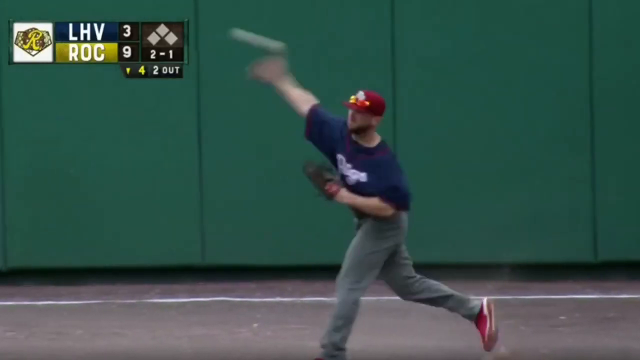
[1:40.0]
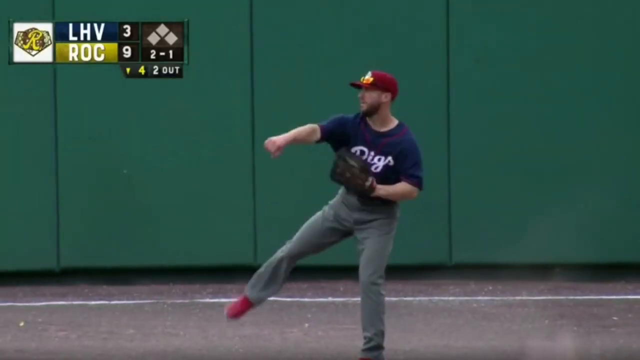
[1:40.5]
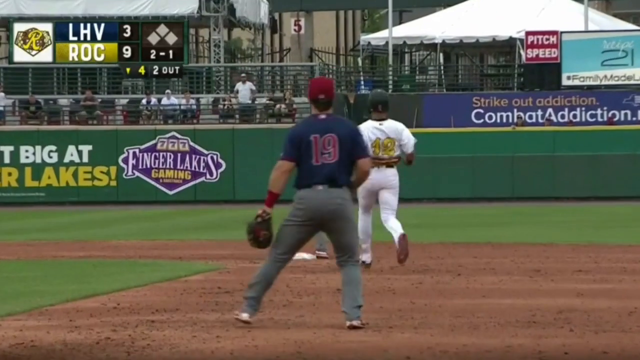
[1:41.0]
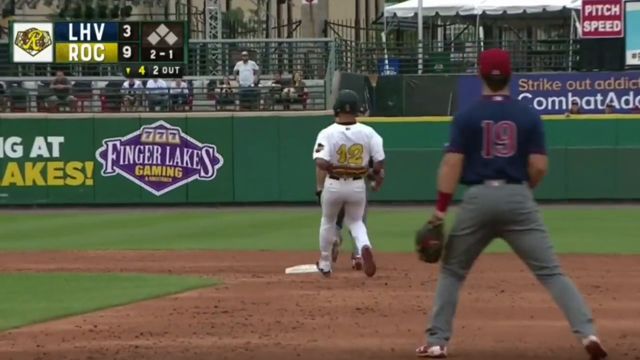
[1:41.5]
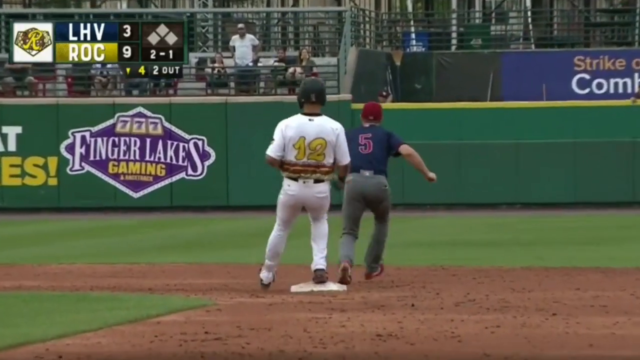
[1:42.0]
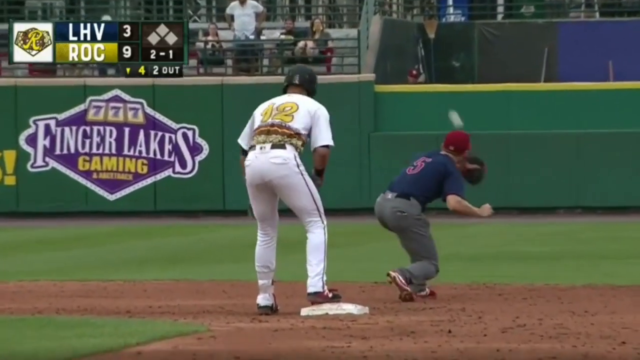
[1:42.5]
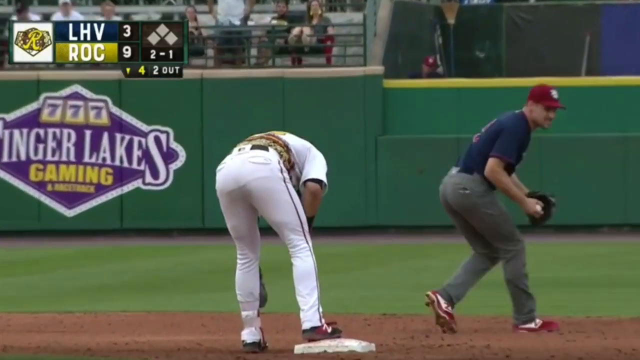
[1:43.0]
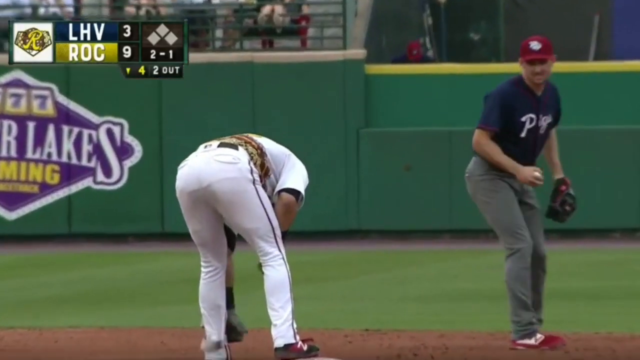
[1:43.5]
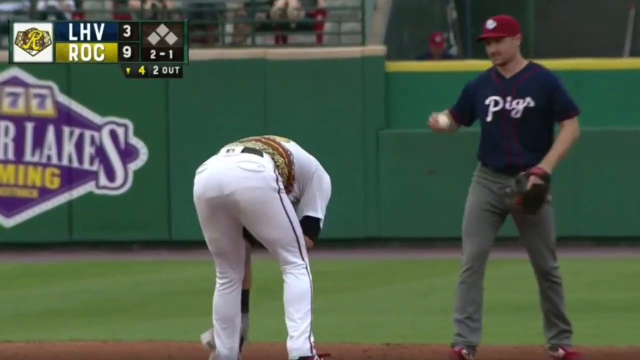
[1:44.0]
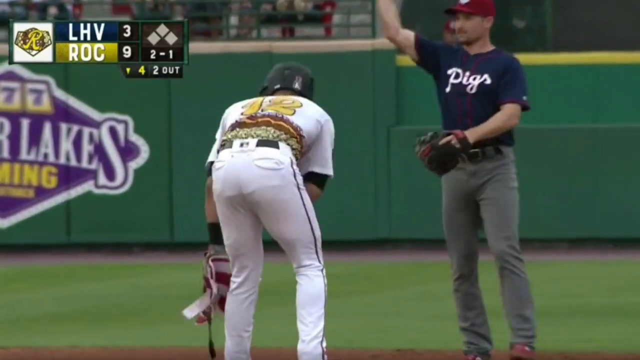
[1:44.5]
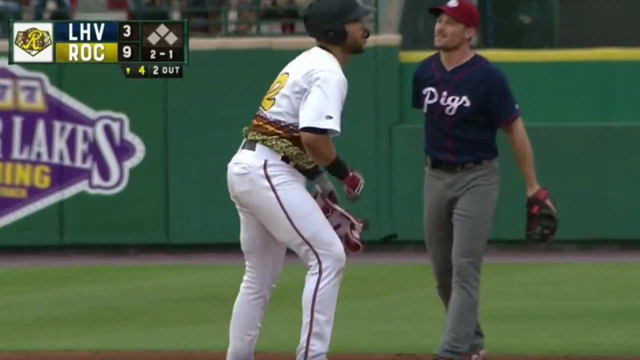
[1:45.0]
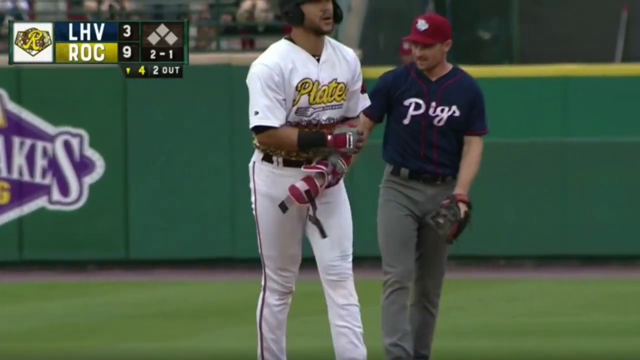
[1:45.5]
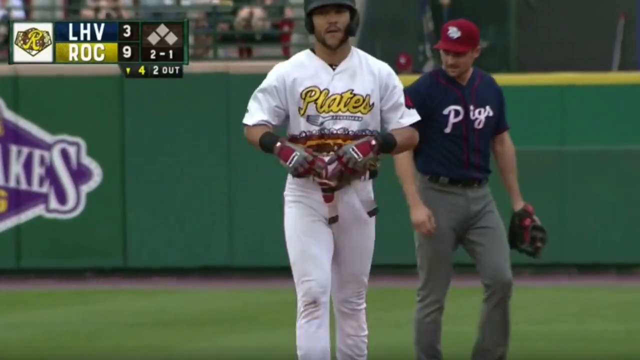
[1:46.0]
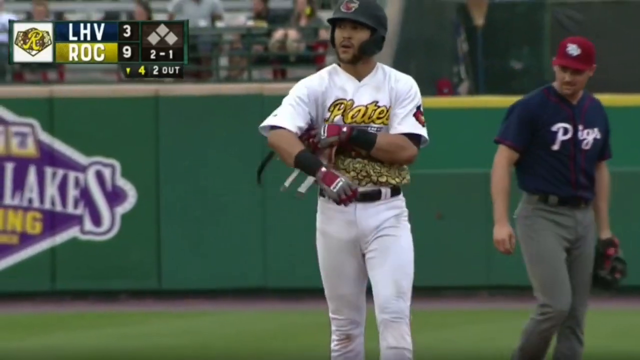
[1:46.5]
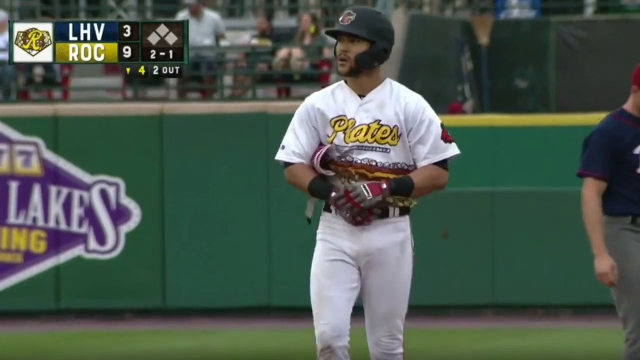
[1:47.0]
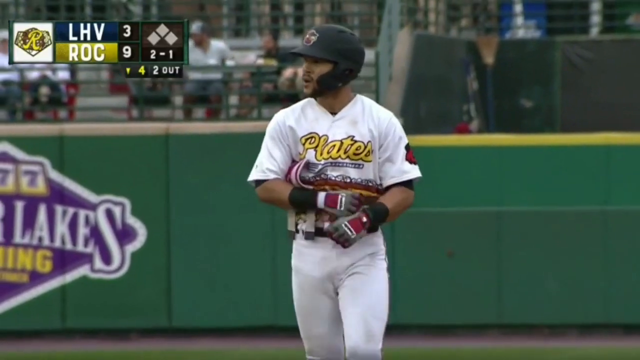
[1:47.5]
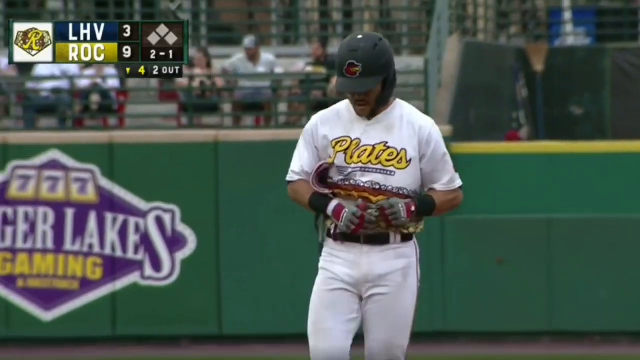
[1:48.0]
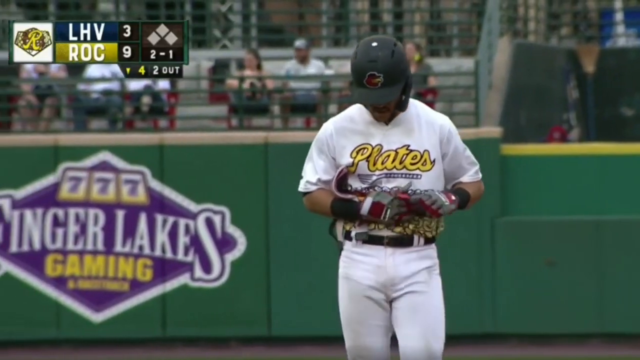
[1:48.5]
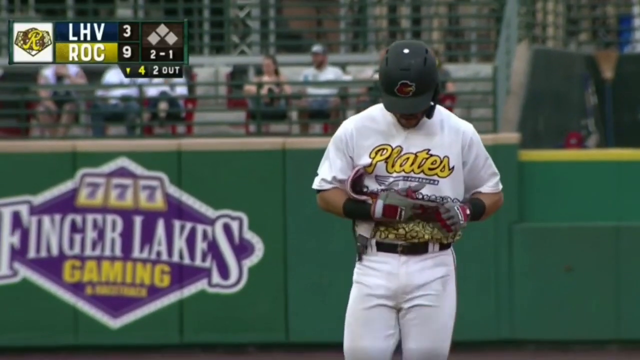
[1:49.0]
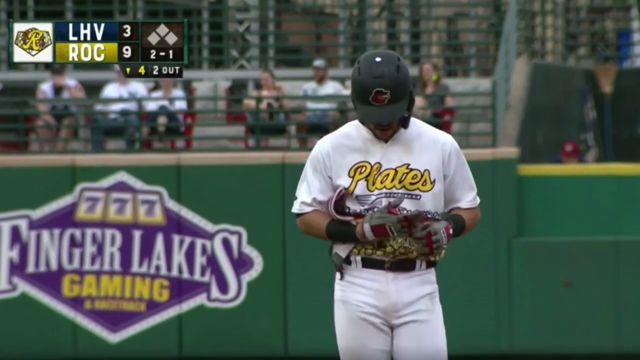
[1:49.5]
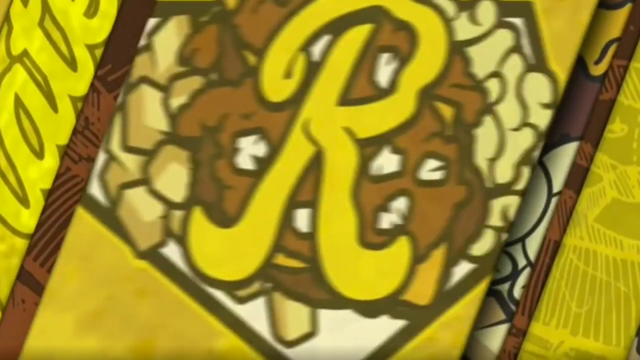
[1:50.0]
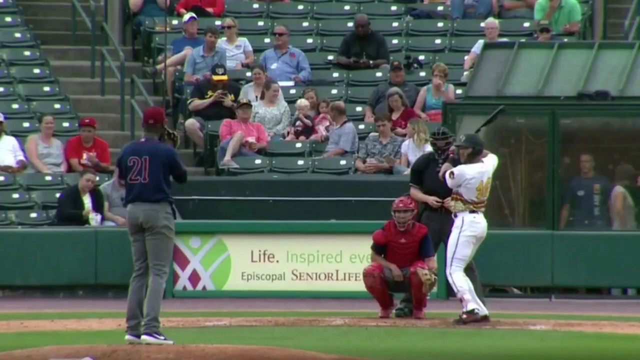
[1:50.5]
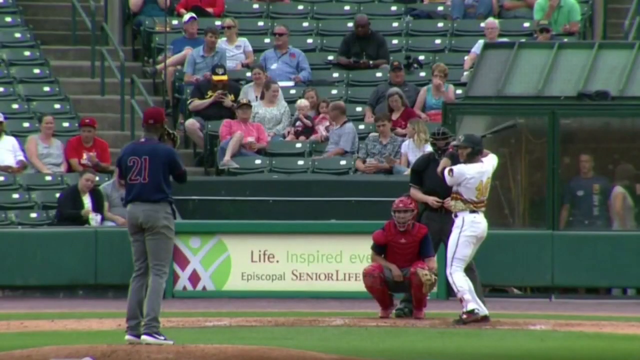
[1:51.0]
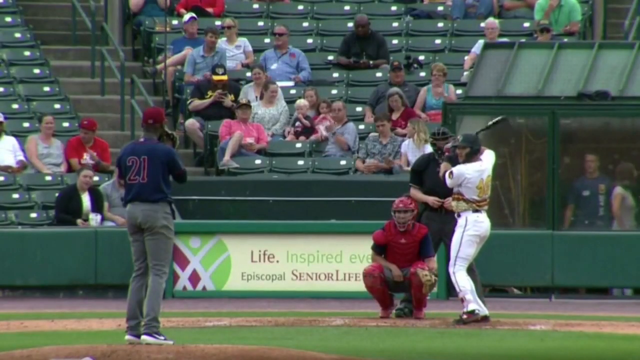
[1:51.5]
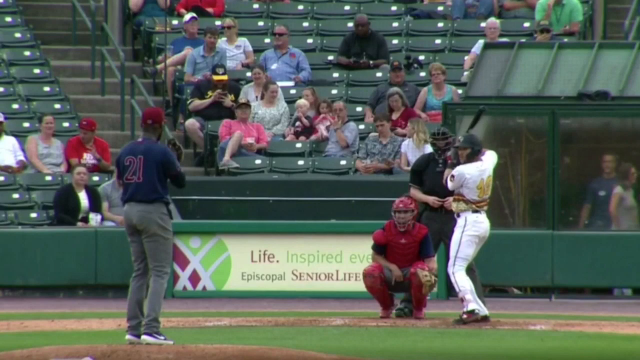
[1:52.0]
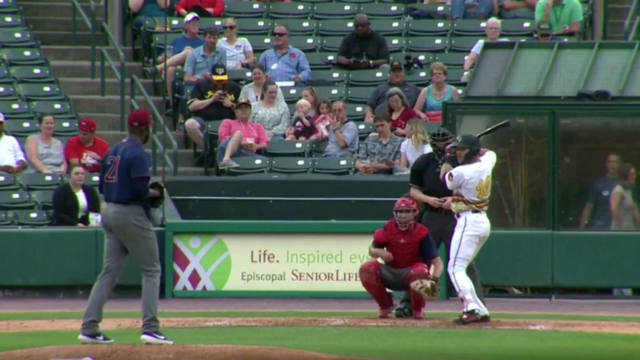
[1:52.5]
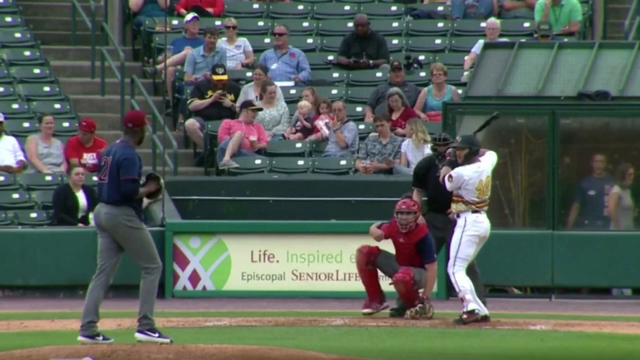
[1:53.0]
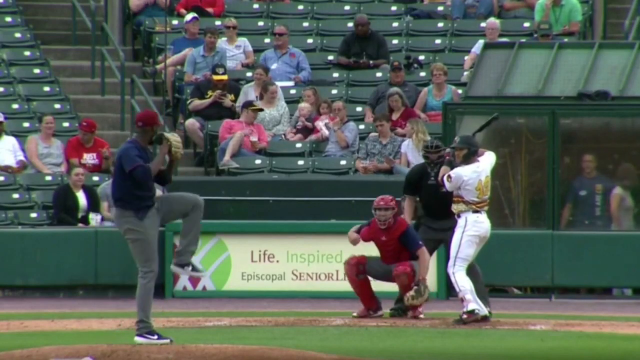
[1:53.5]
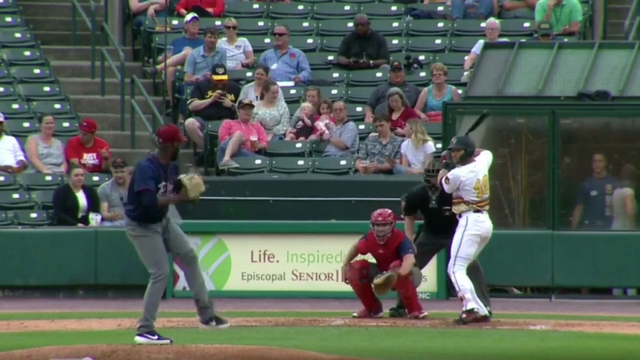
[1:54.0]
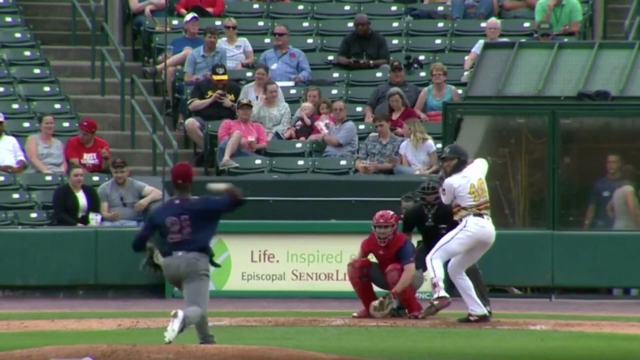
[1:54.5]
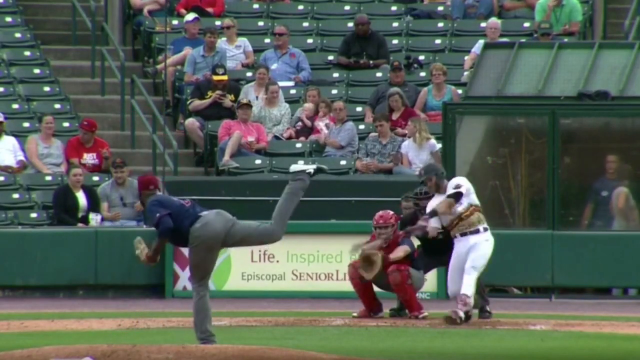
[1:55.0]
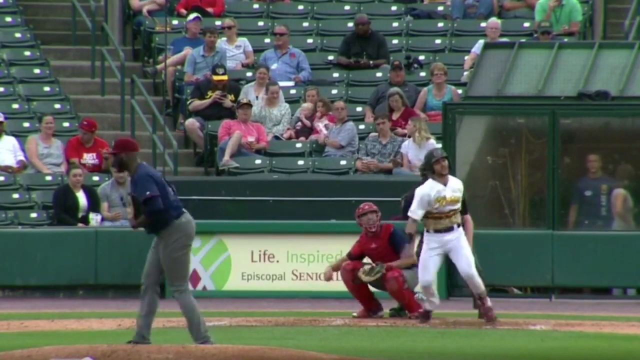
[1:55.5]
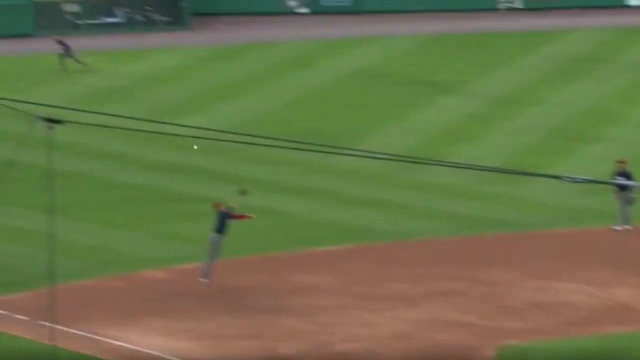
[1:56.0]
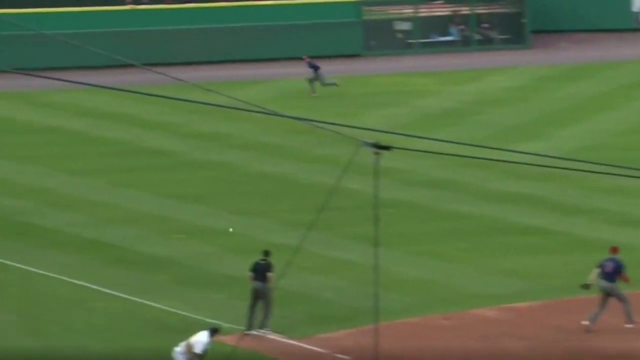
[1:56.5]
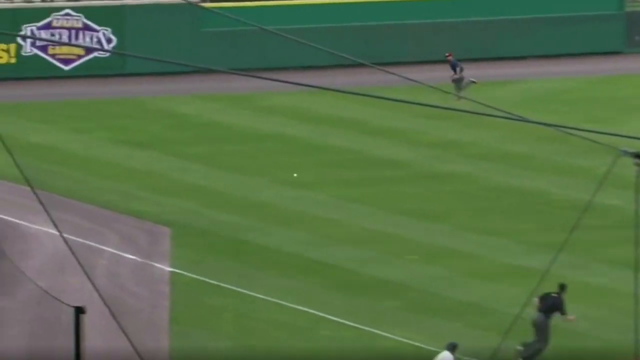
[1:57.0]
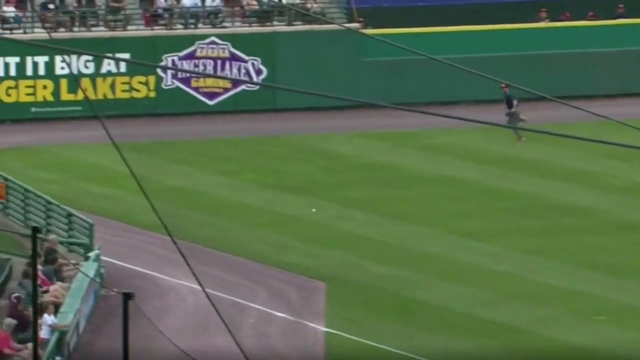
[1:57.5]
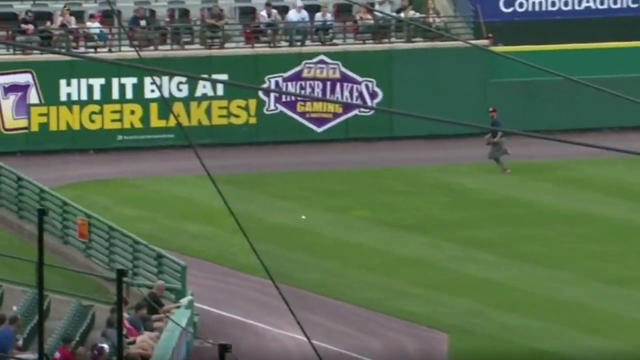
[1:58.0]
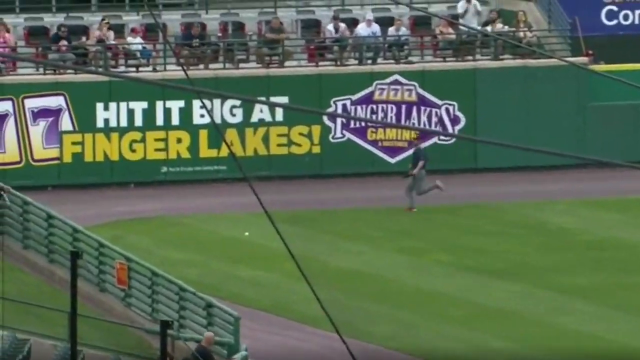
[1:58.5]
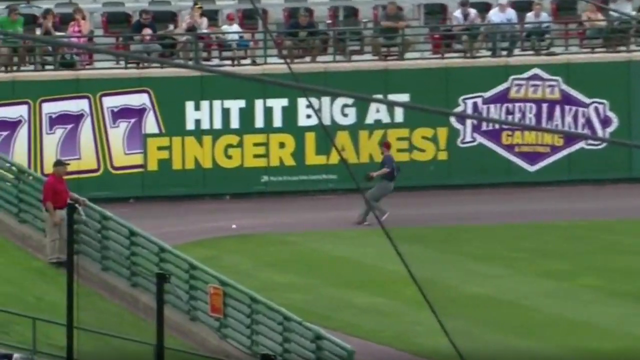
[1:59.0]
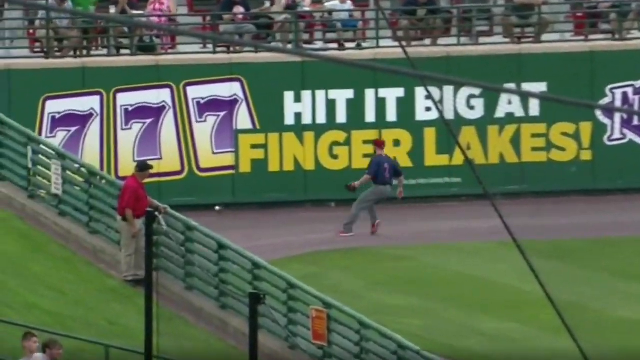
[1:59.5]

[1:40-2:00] One team pitches while a batter from the other team tries to hit the ball out of the park. A billboard in the background shows "7-7-7". The ROC versus LHV scoreboard is on screen.